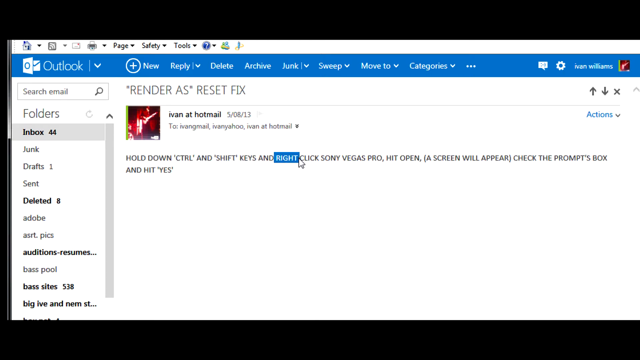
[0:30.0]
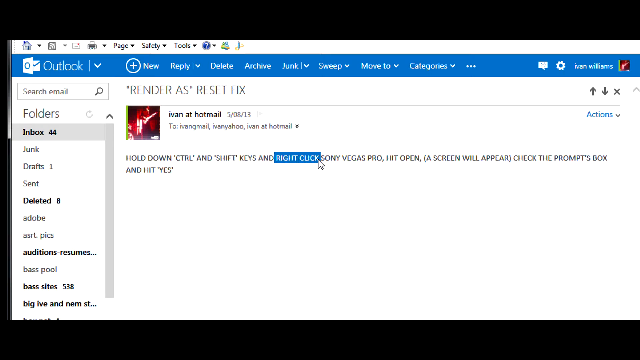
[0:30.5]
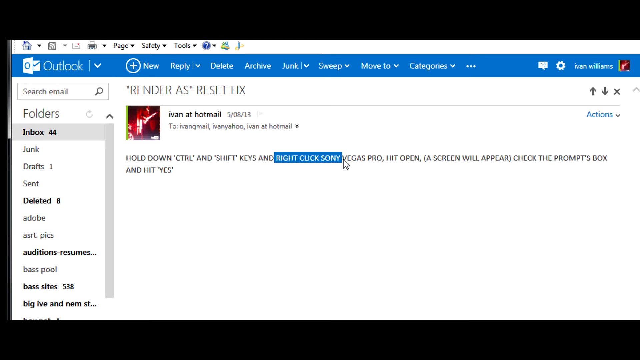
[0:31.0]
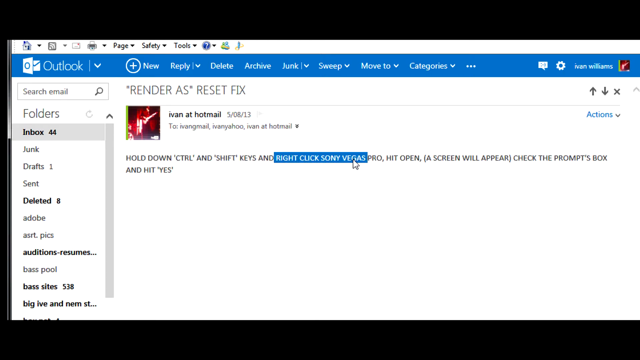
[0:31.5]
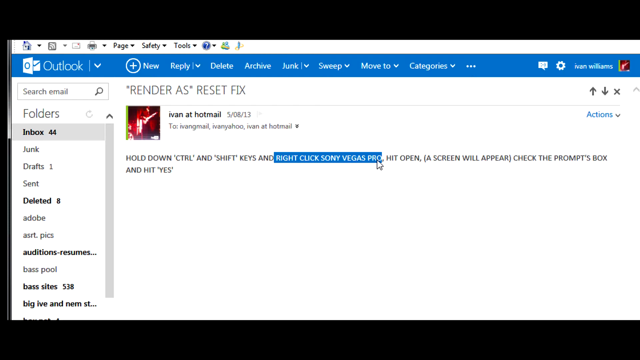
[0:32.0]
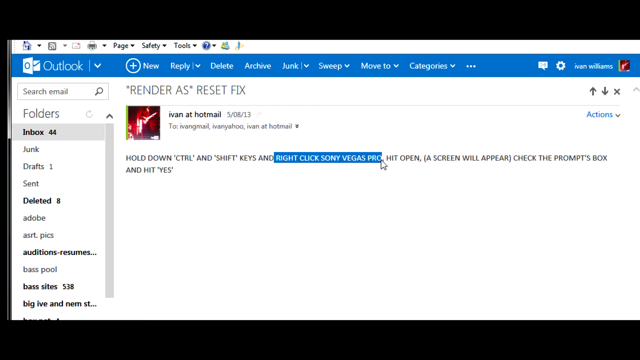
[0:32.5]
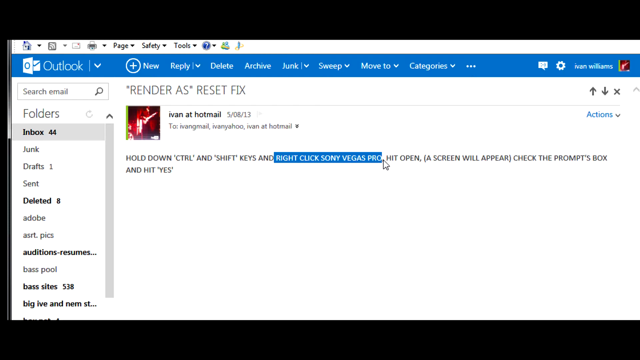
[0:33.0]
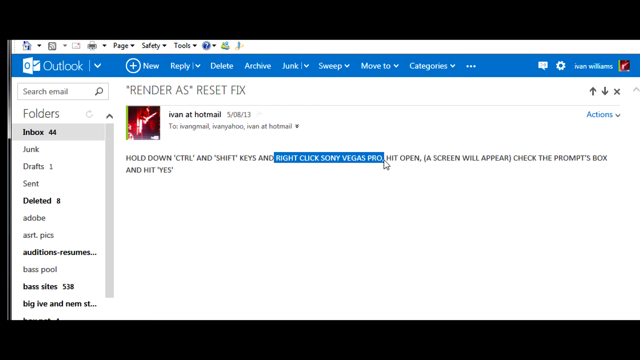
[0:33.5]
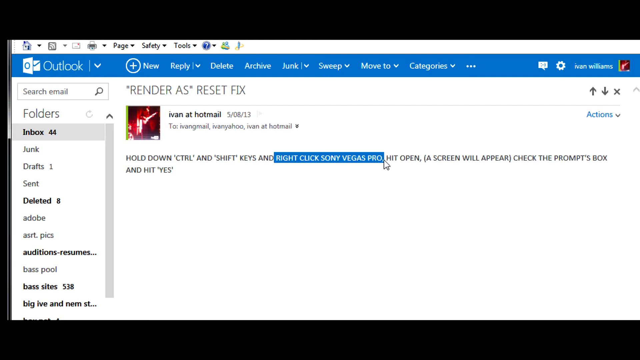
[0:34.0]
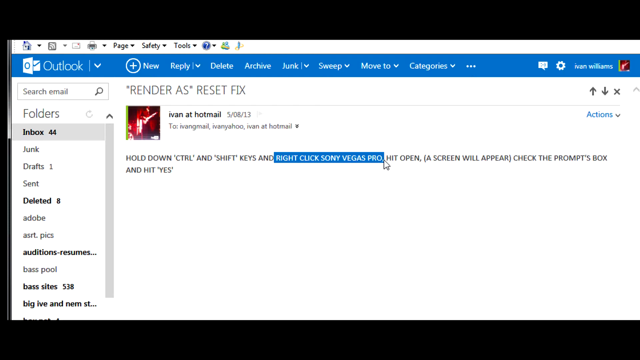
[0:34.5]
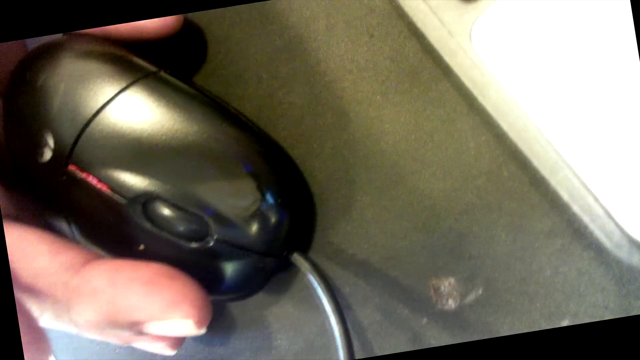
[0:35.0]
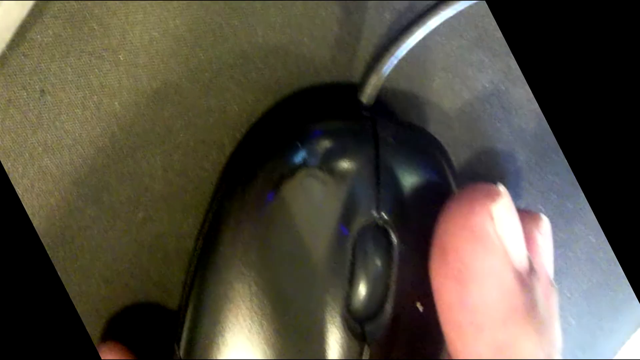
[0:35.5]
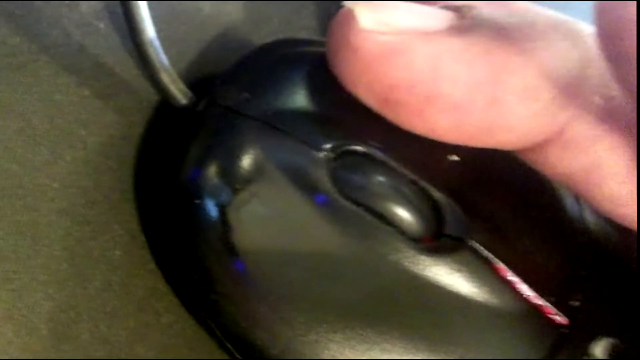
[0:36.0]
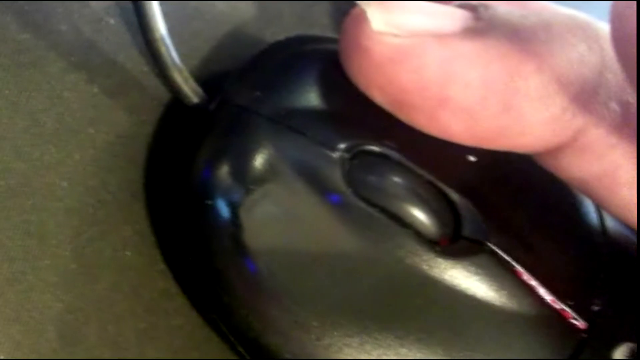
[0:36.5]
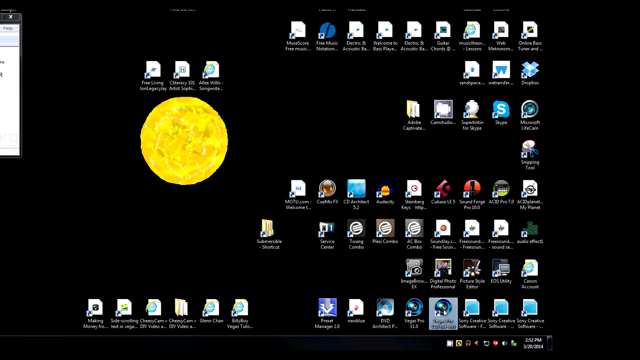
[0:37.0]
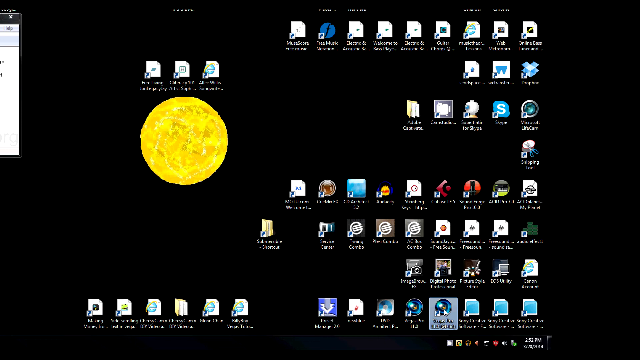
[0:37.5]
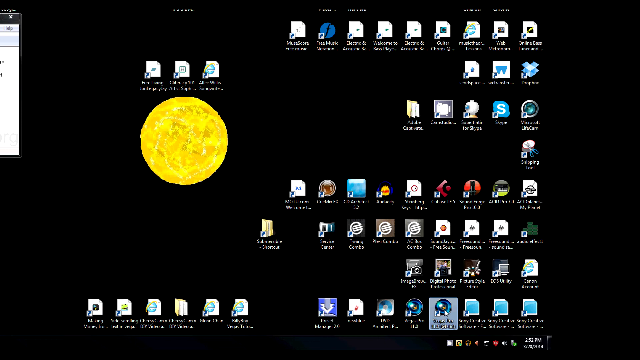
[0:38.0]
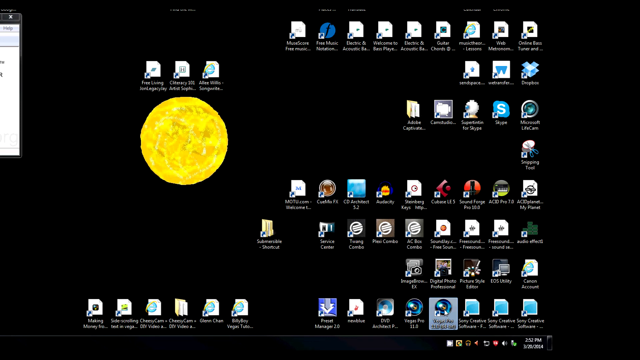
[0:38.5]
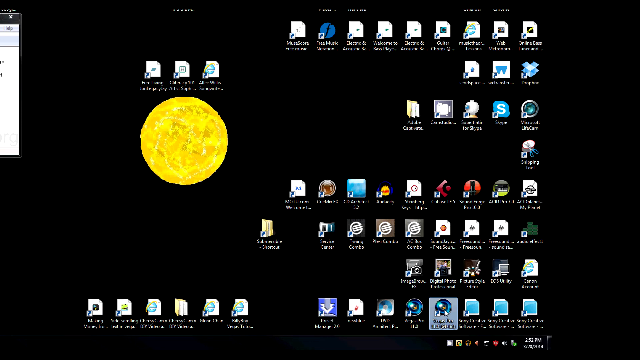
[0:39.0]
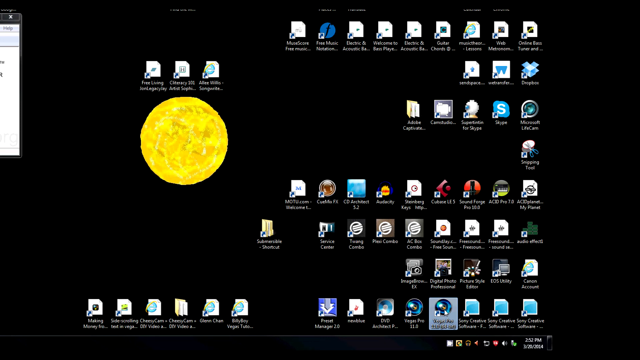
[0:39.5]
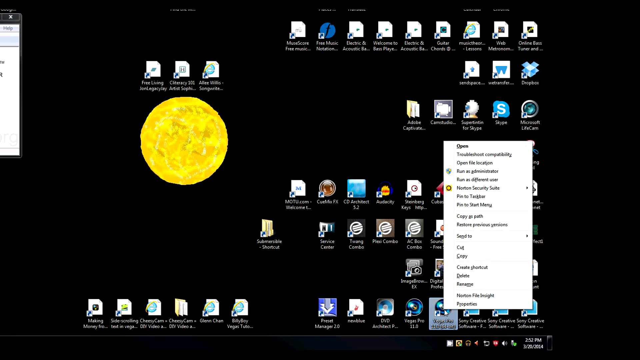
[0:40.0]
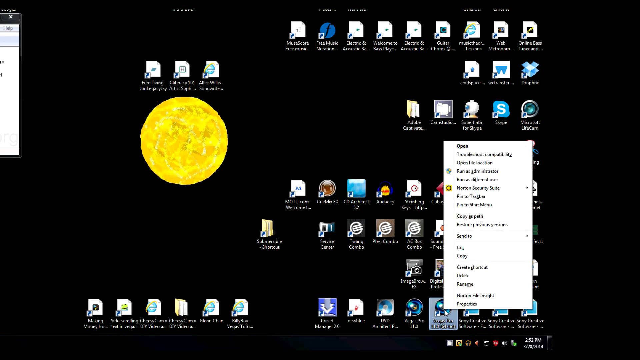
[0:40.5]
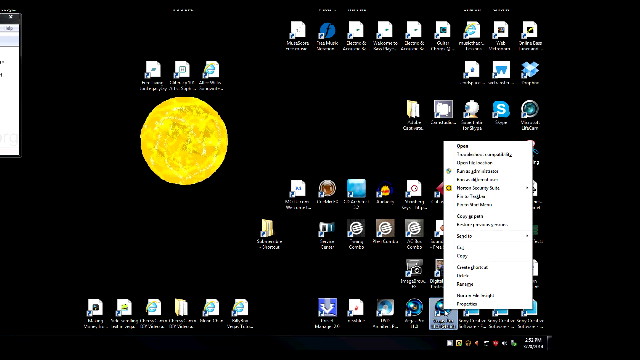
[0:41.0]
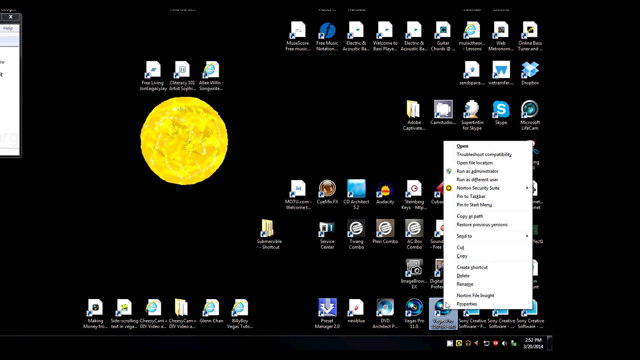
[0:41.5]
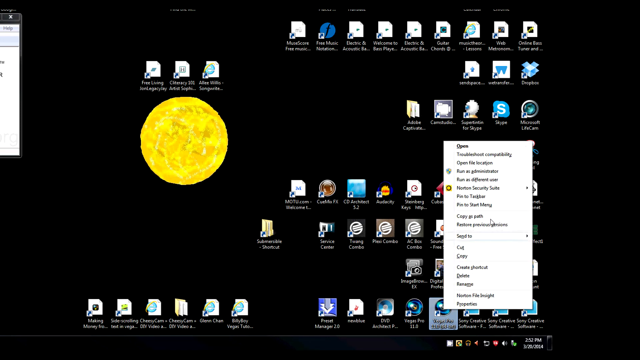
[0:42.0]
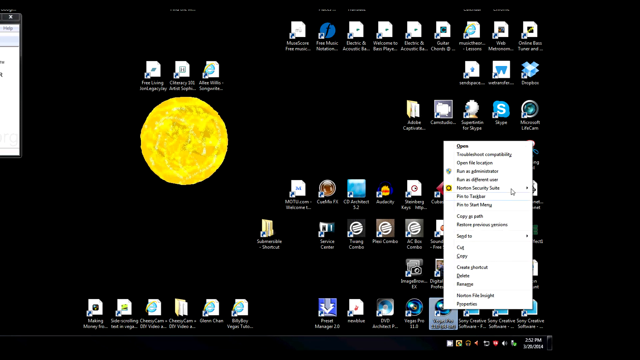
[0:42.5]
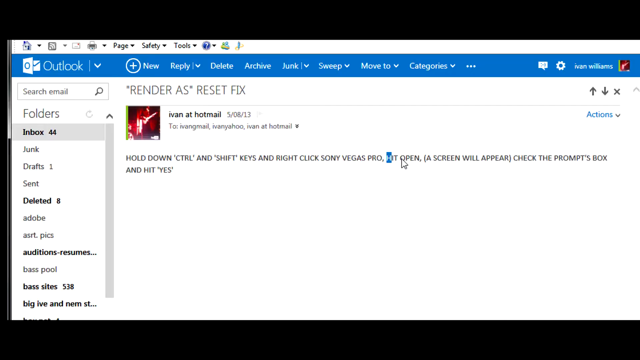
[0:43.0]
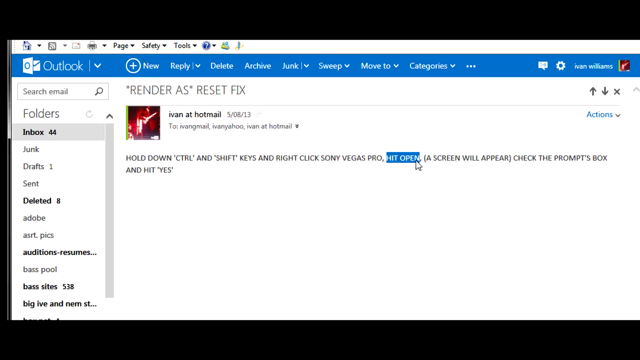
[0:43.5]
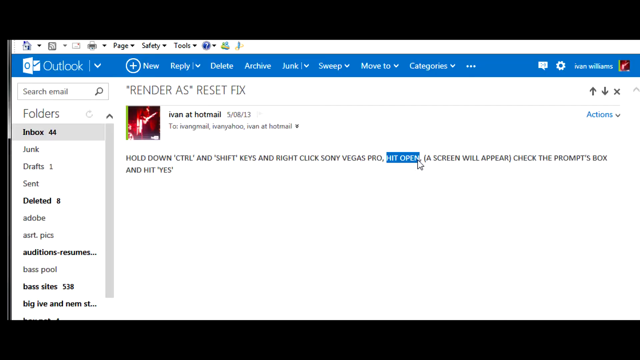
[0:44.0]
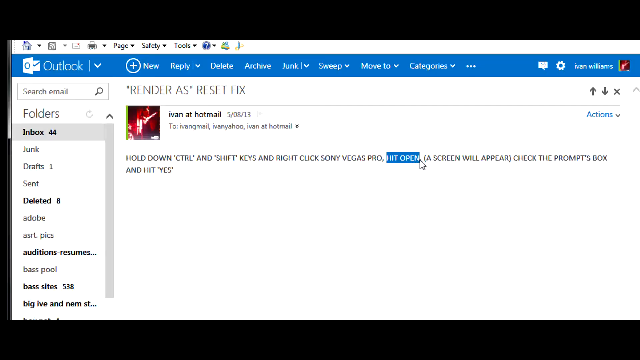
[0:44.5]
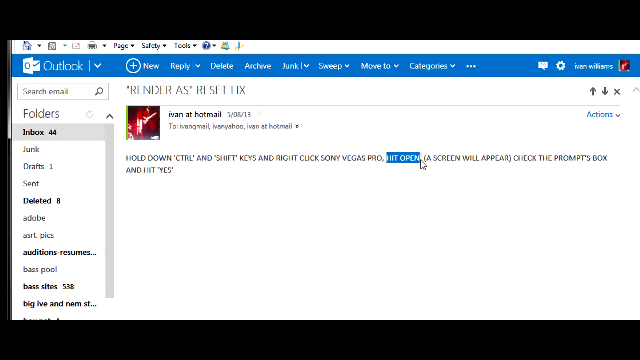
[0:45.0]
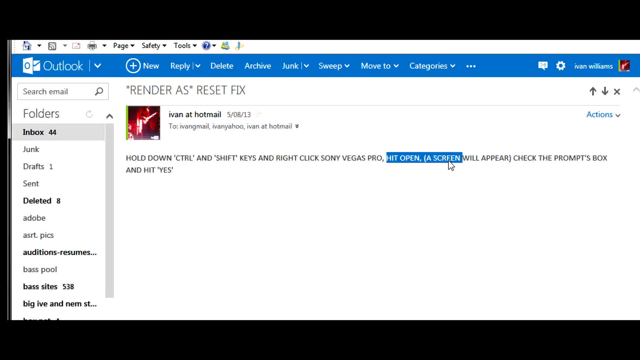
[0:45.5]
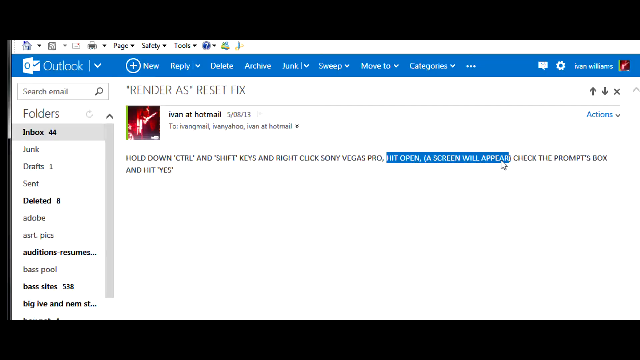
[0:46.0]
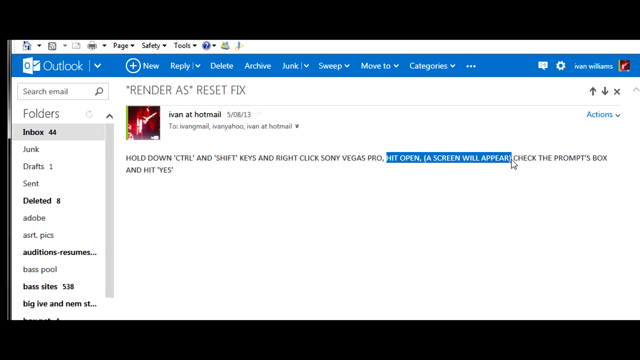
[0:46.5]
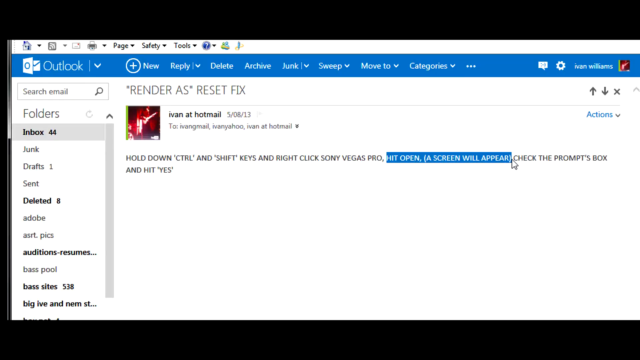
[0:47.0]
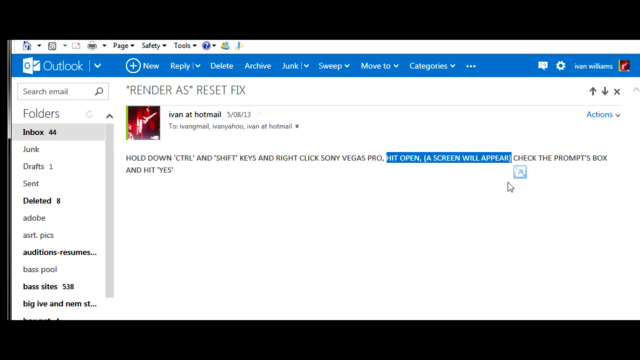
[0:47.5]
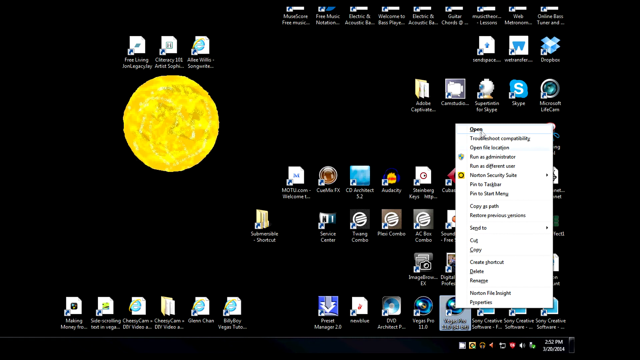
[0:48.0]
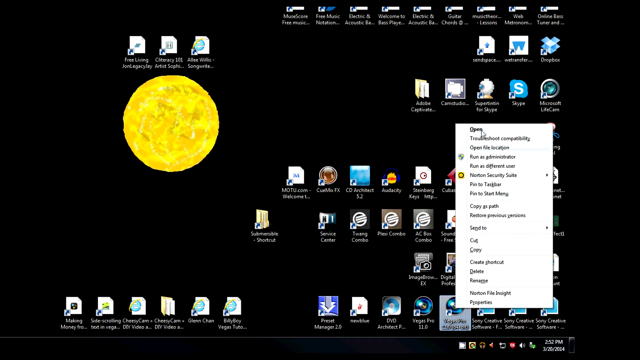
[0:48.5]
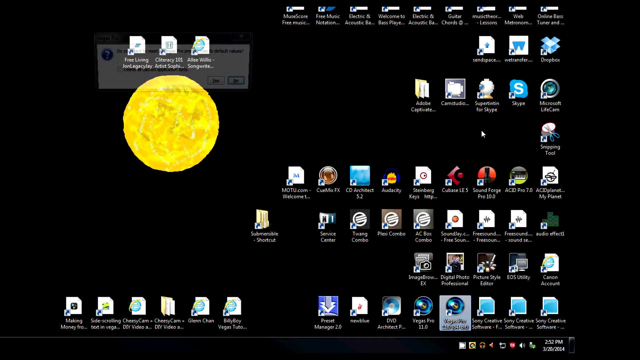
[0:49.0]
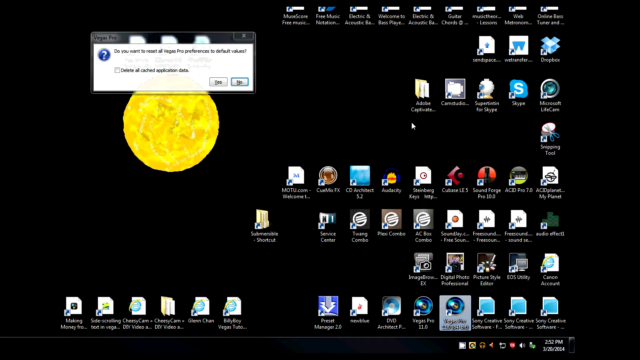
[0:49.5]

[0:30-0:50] The person with the mouse cursor highlights more text, which now reads "right-click Sony Vegas Pro." The screen transitions to a spinning design with a mouse in the center and someone's hand gripping it. It spins, then stops, showing someone with their finger up; the mouse is black with a cursor wheel in its center. Next, what looks like someone's desktop appears, with a yellow moon on the left side of the wallpaper, which is otherwise black, and rows and rows of icons. There also seems to be an open menu, as if someone right-clicked, apparently the Windows menu. The person highlights "hit open, a screen will appear" in the email, then goes back and hits open on the Windows drop-down menu. A pop-up that says "Vegas Pro" appears at the top left.